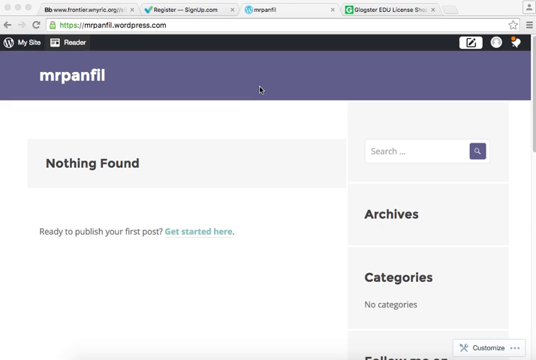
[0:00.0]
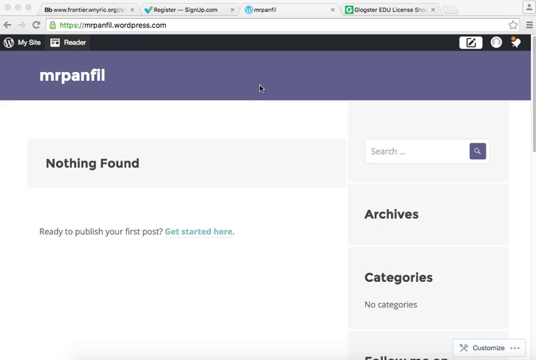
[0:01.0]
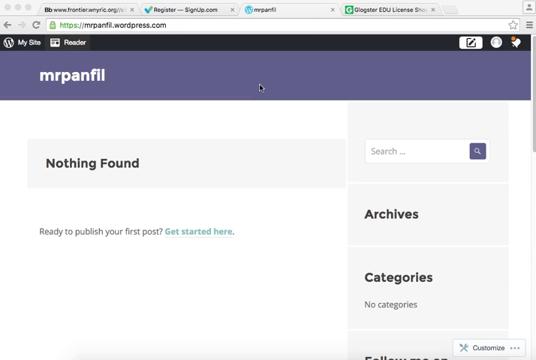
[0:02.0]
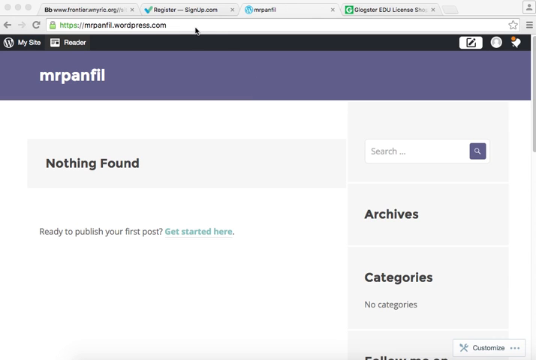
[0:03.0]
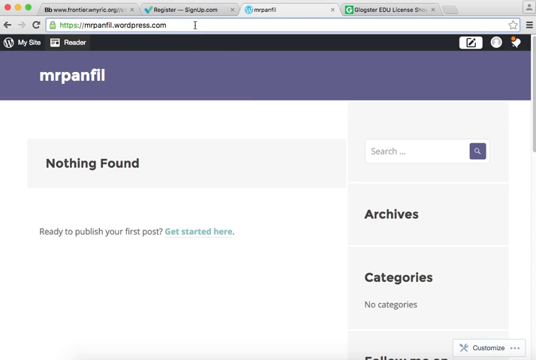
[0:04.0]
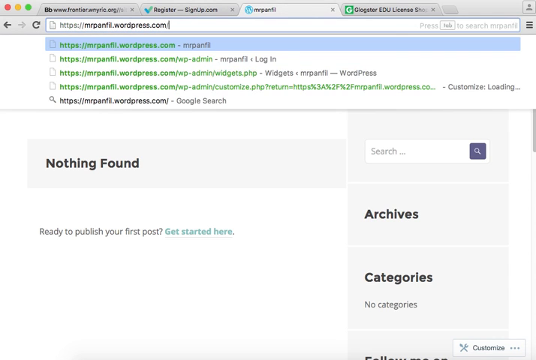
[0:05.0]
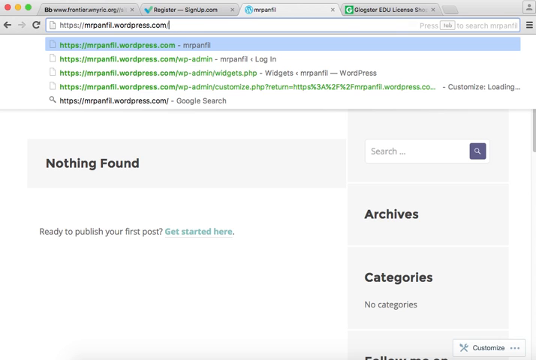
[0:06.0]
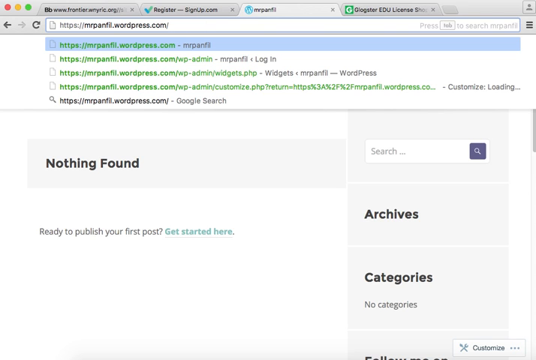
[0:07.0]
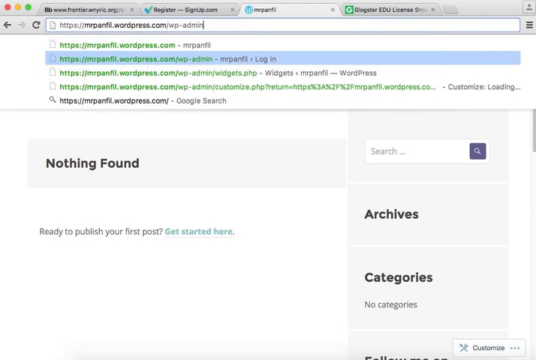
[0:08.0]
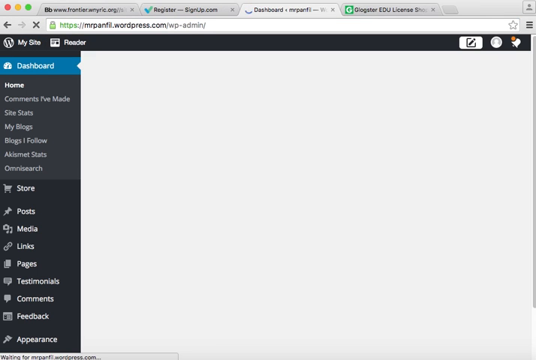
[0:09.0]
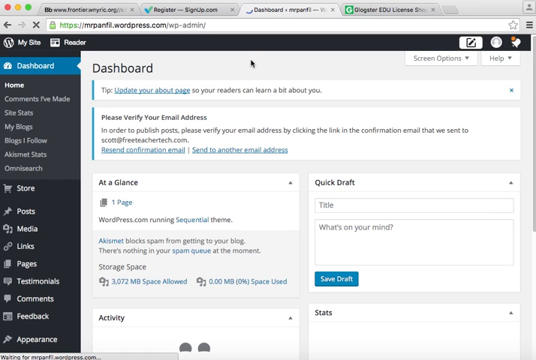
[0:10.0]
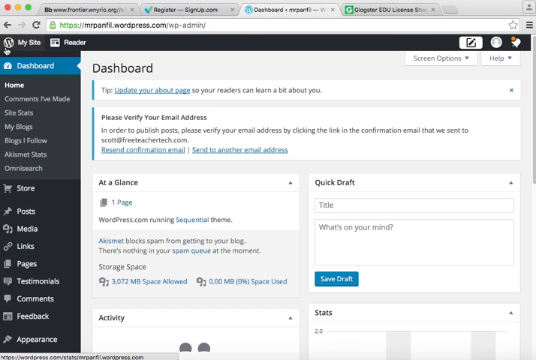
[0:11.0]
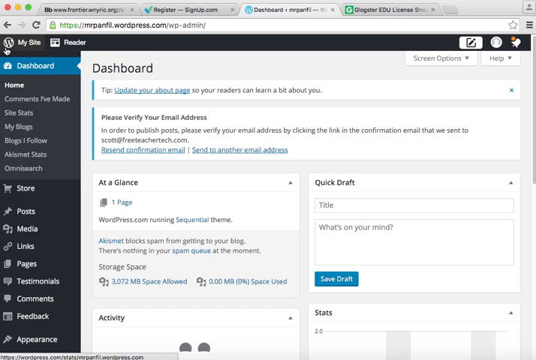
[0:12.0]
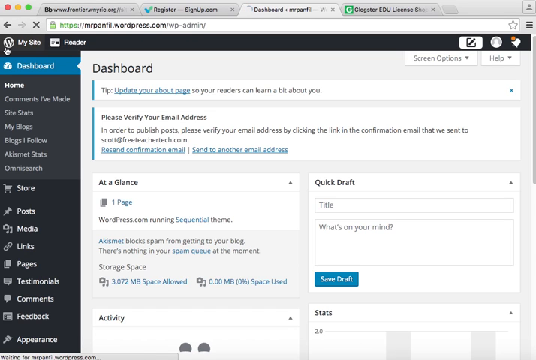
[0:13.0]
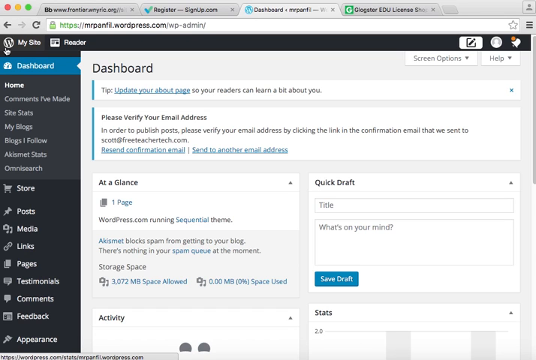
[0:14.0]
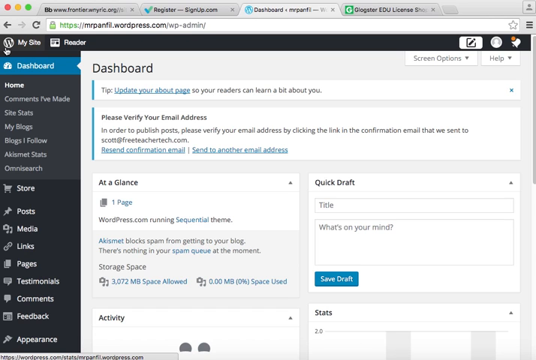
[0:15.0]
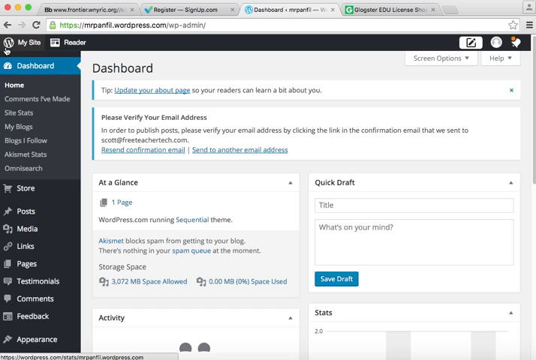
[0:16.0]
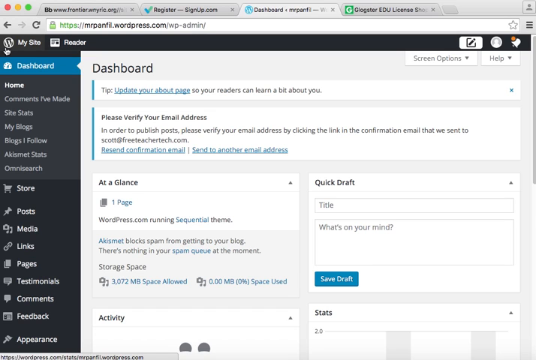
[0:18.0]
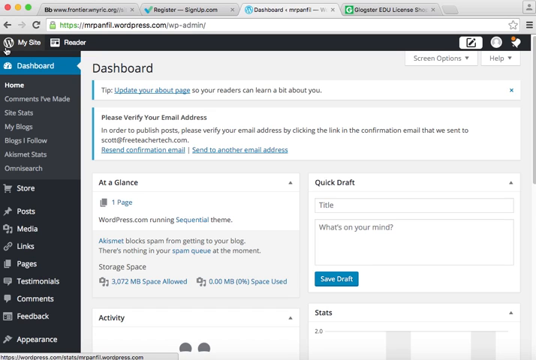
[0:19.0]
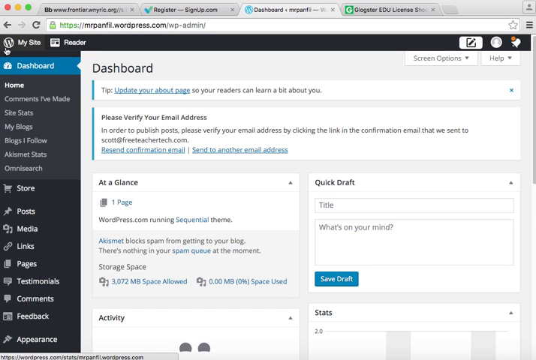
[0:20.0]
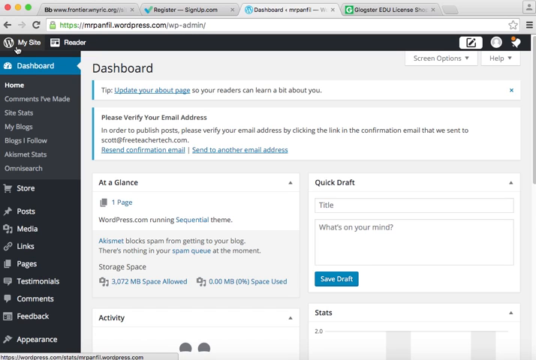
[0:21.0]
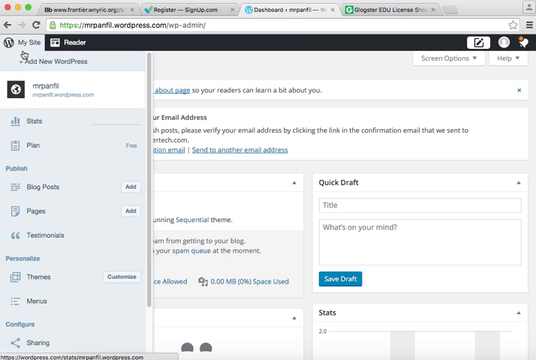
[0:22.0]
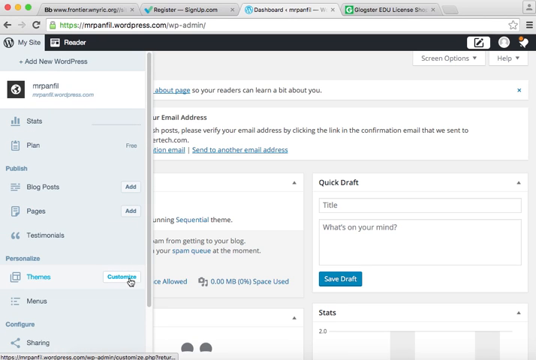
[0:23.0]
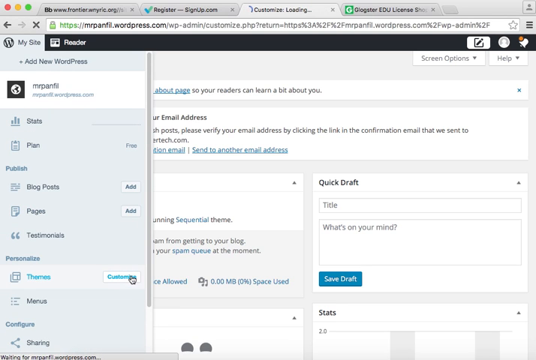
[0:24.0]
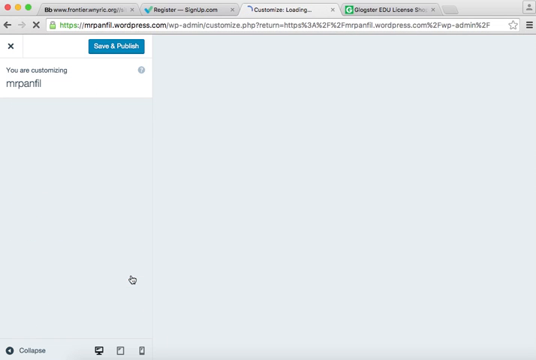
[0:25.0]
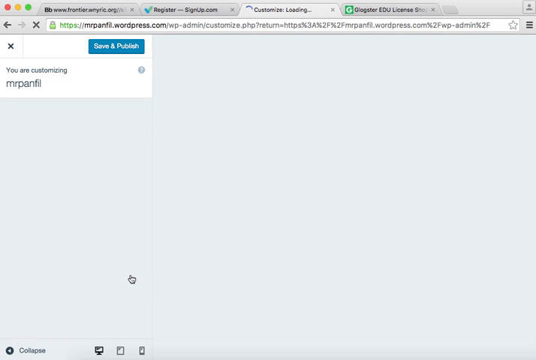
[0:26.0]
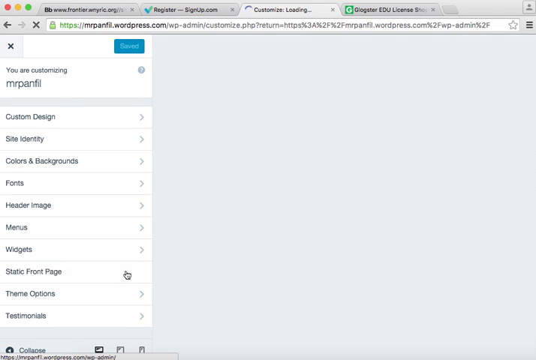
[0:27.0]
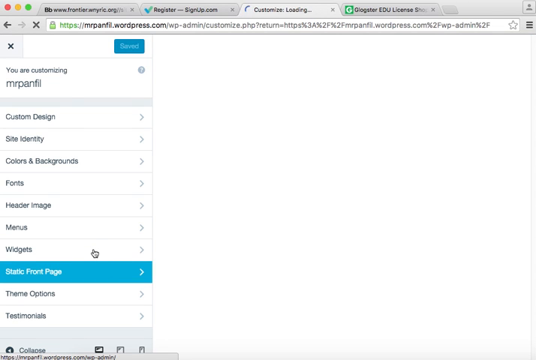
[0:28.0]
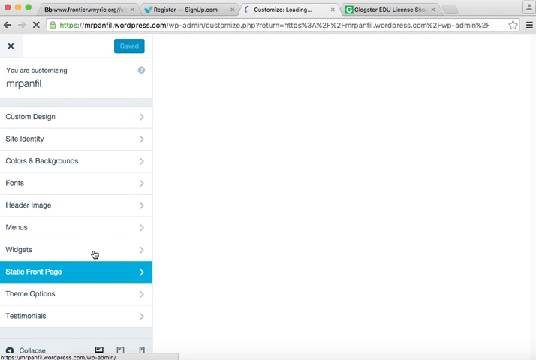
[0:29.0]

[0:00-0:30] The video begins on a WordPress page. The user goes to the very top and changes the URL to get into the admin page, apparently wanting to go into the settings to change the webpage. The user waits for the page to load, then clicks on the navigation at the top left to open the themes setting. After clicking the theme setting, they wait for the theme to load, and the shot ends there.